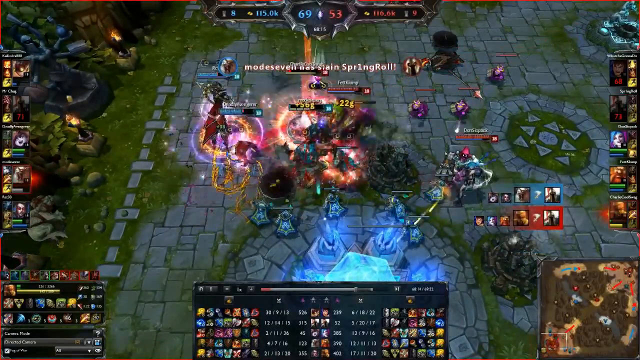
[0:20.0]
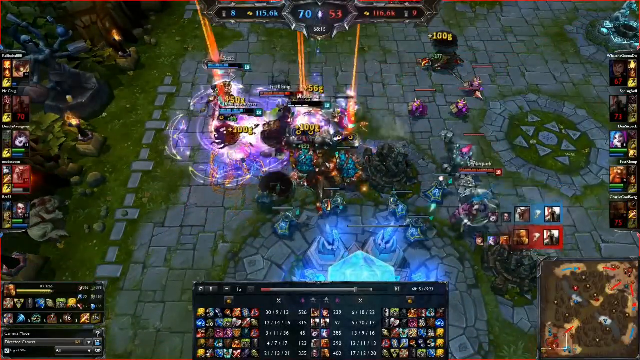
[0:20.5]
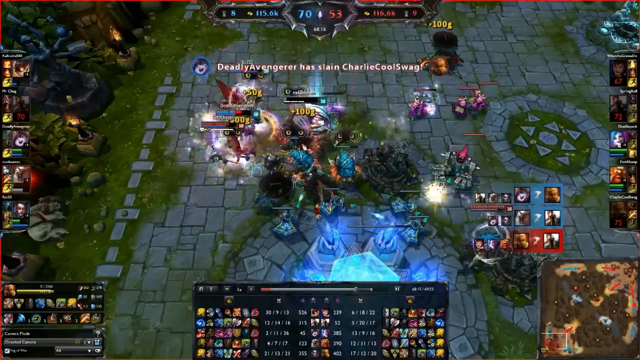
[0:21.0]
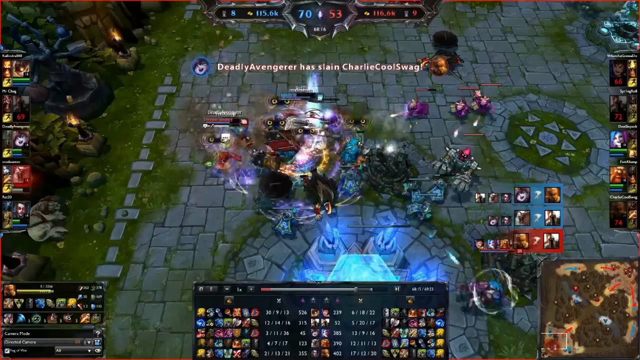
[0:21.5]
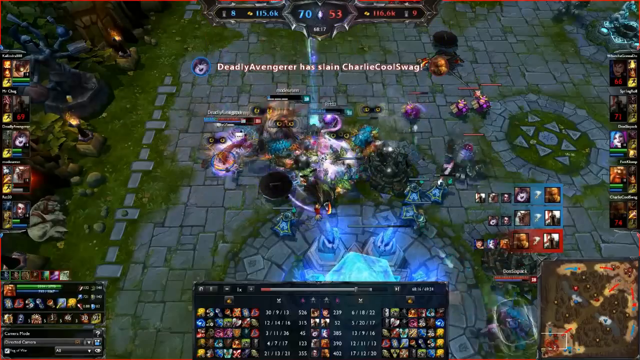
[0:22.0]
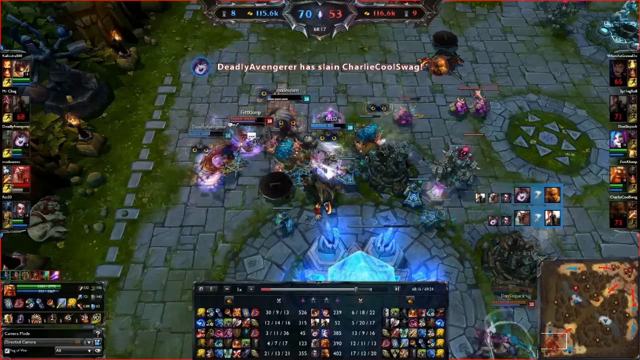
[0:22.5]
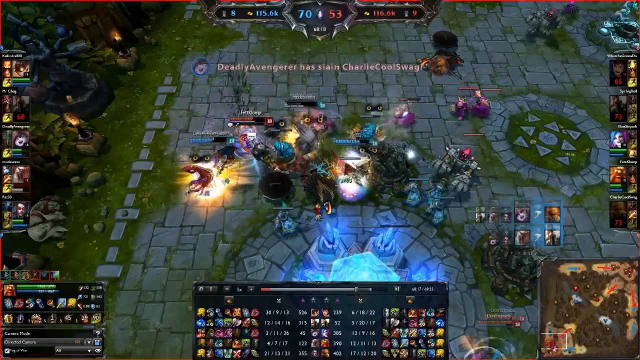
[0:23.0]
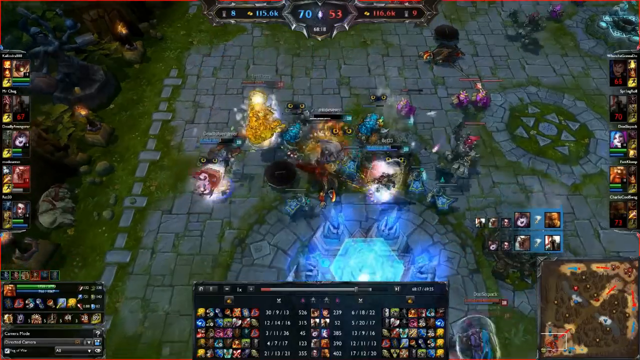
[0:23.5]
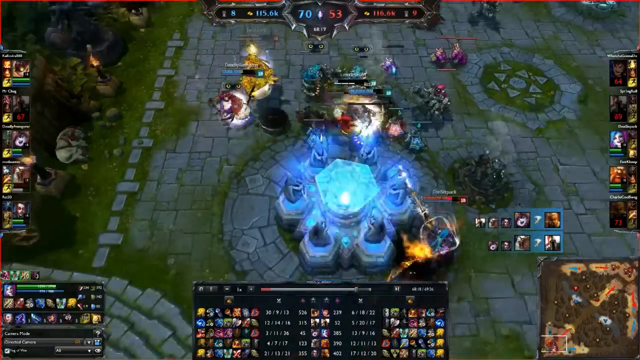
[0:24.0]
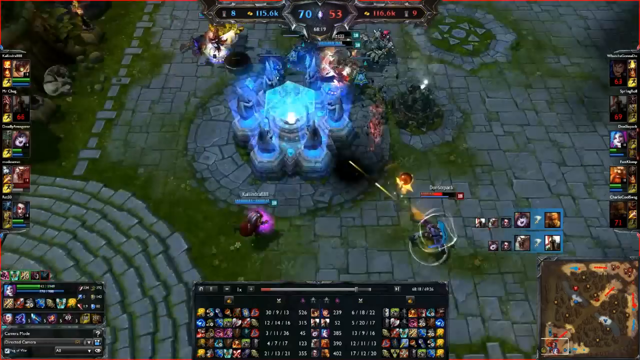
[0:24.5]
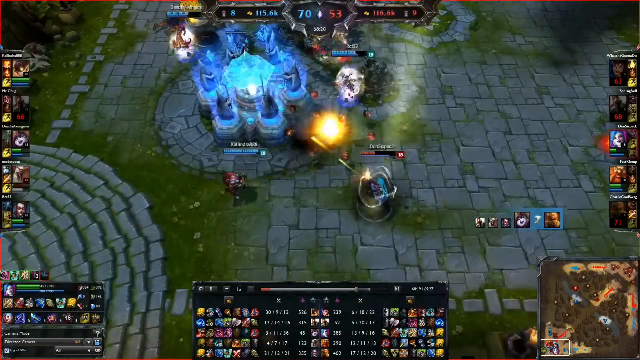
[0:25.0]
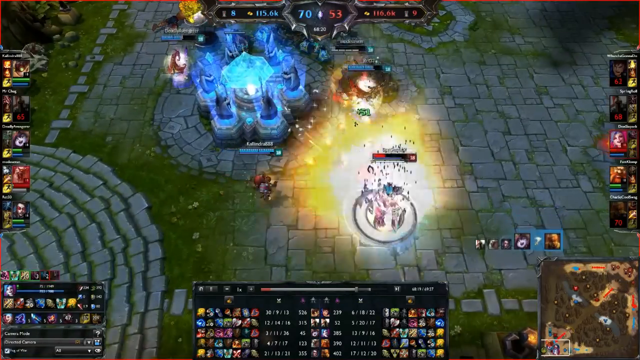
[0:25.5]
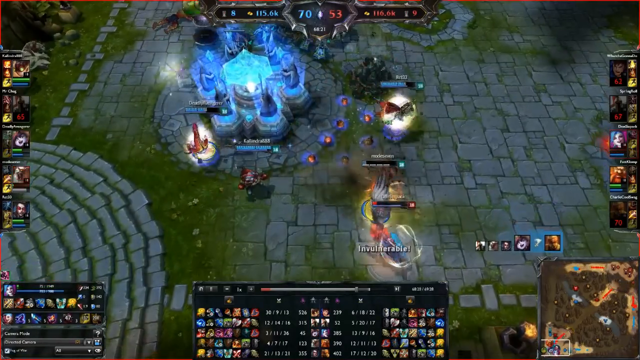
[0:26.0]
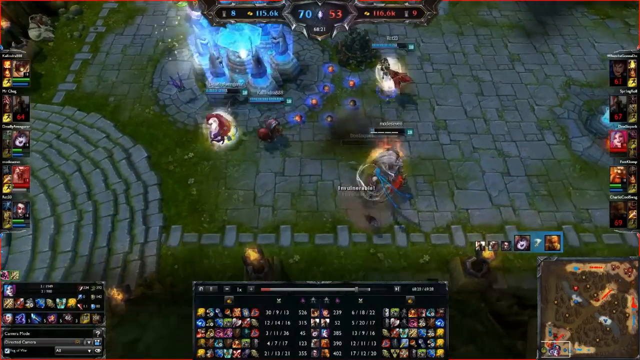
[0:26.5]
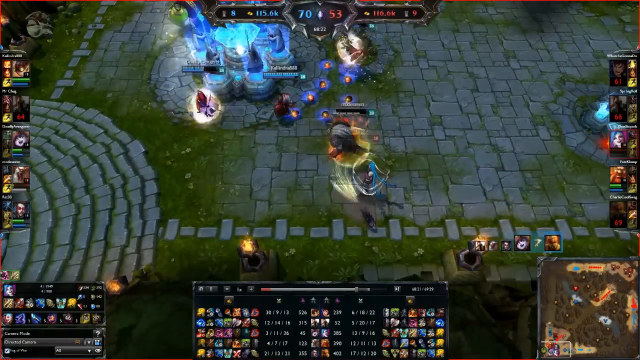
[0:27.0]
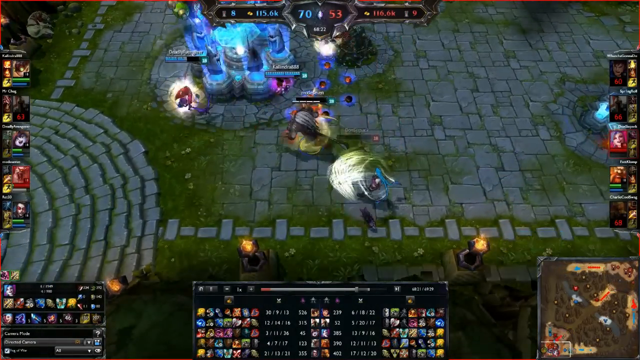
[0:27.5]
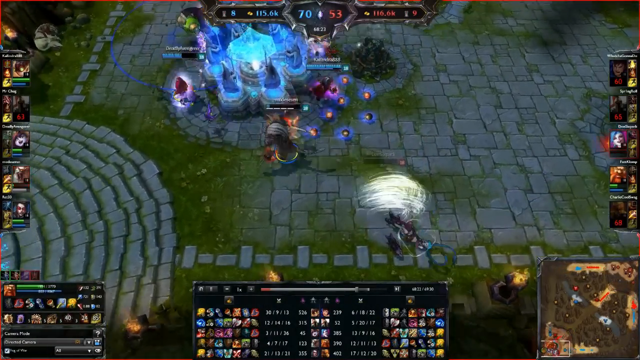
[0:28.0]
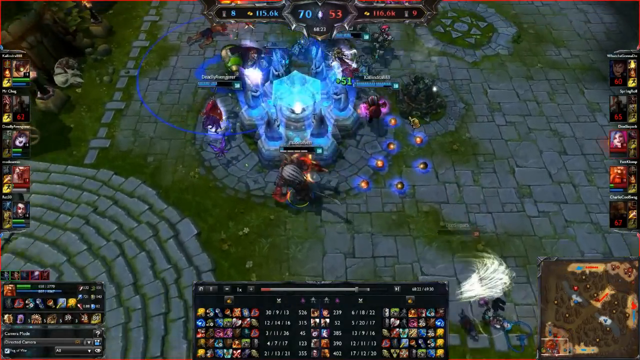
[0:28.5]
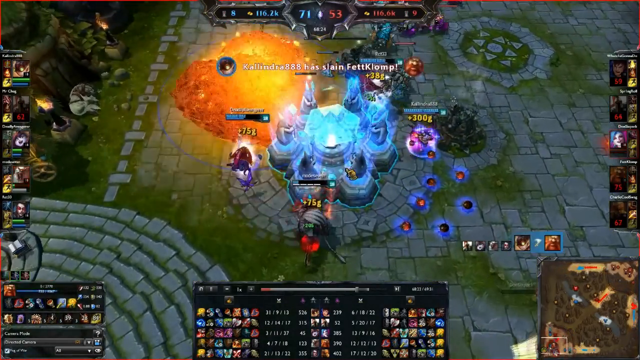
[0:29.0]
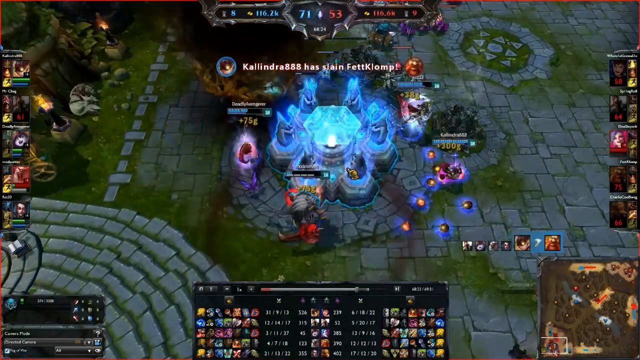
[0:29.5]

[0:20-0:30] A big melee is in the center of the screen. Red, kind of pulsating circles come off the fighters, along with some purple ones, points count above their heads, and yellow appears where life points are being taken away. At the bottom there is a big blue crystal with some Guardians standing in front of it. Down the right side there are some rocks and some grass. The ground is mostly a concrete surface with some grass around. All kinds of melees are happening, and the player's character is in the middle of it. He goes down to the right, shooting off what looks to be arrows. Then some potions pop out, all kind of floating around with a little blue halo around them. He goes up and grabs one, then comes over to the left a little more, ending up on the underside of the big blue gem.